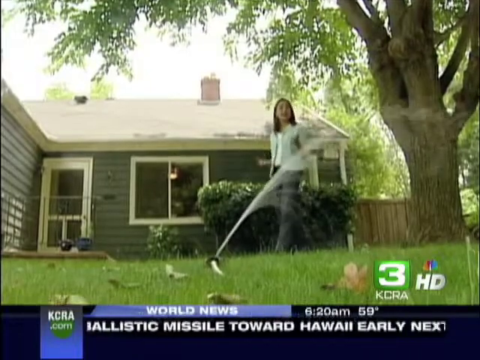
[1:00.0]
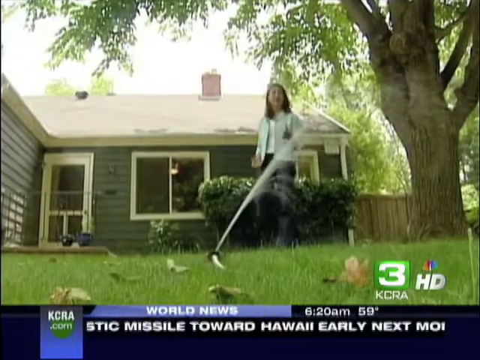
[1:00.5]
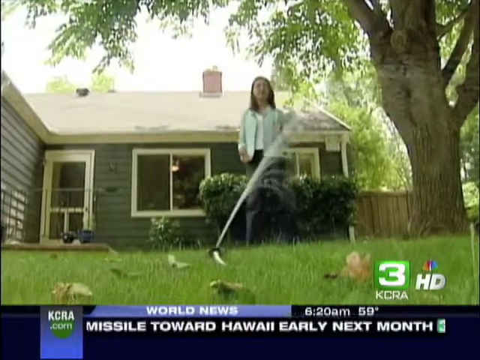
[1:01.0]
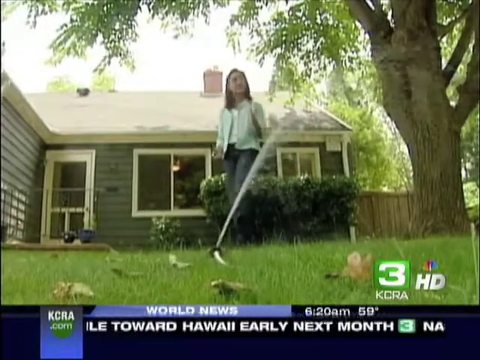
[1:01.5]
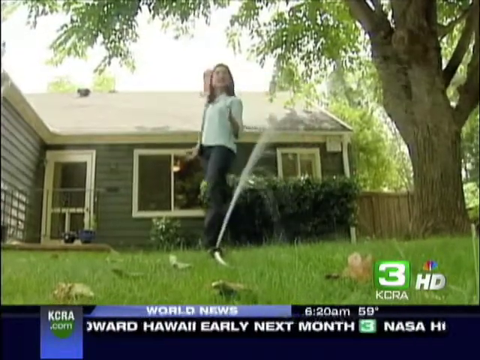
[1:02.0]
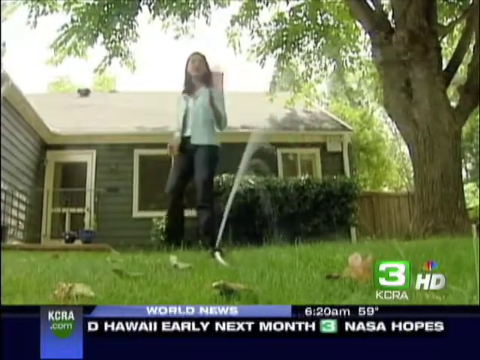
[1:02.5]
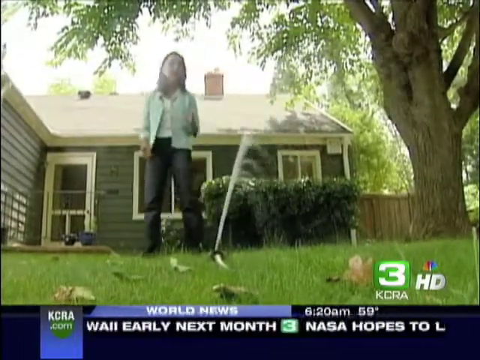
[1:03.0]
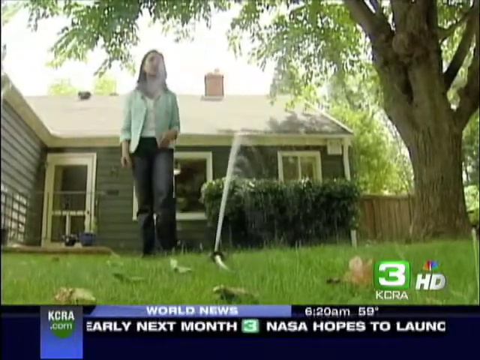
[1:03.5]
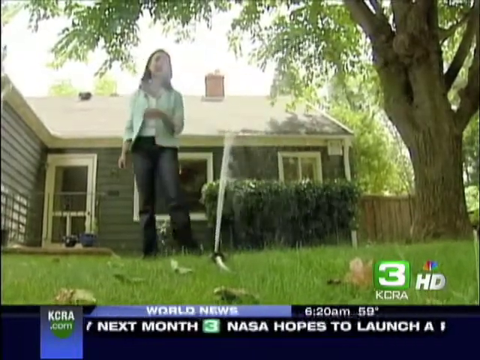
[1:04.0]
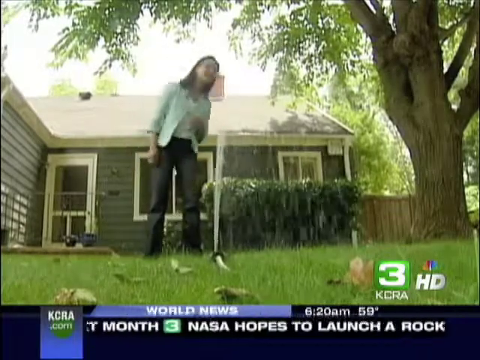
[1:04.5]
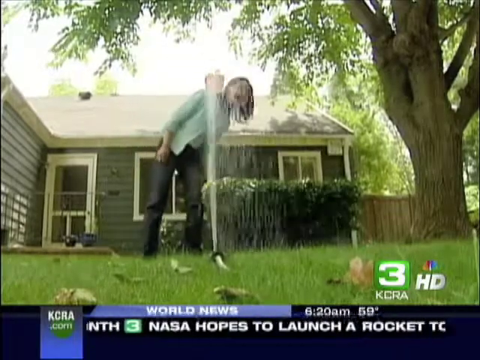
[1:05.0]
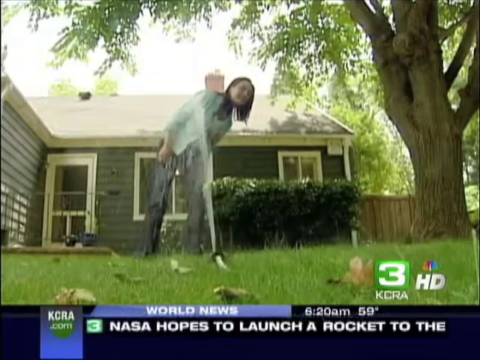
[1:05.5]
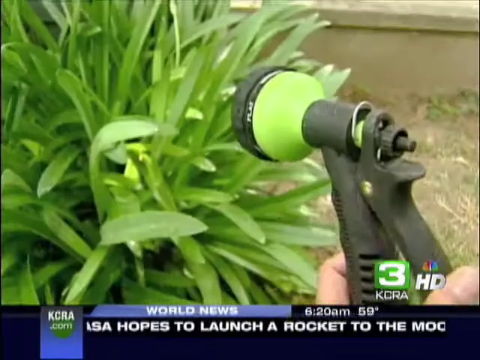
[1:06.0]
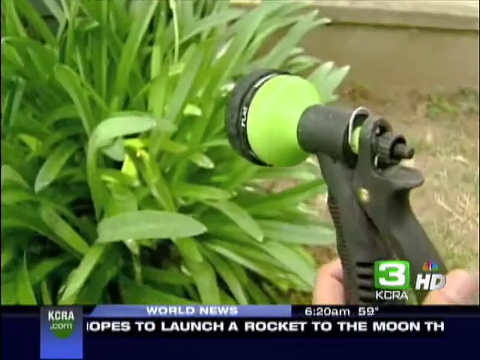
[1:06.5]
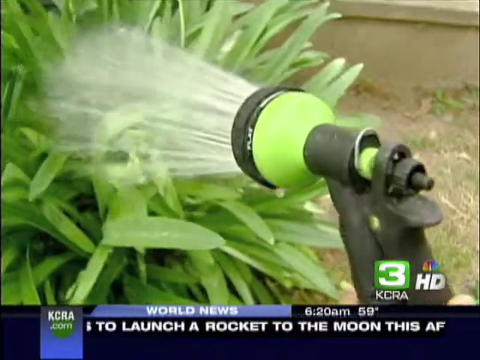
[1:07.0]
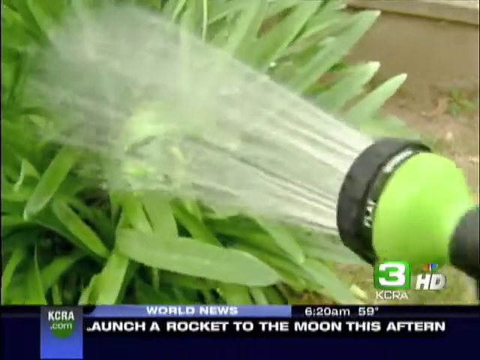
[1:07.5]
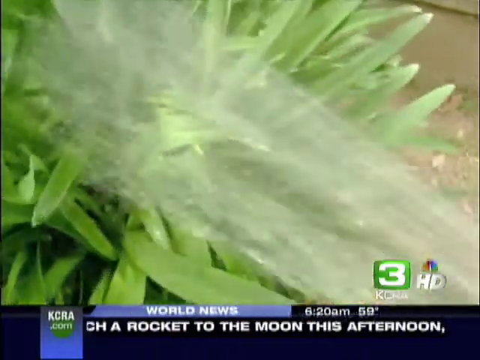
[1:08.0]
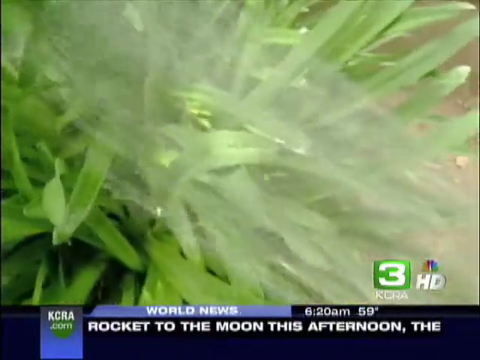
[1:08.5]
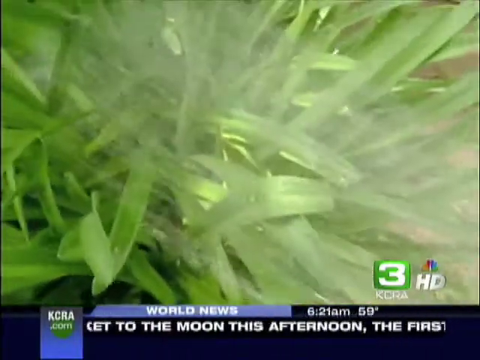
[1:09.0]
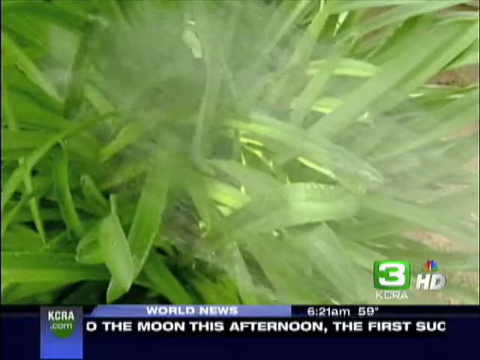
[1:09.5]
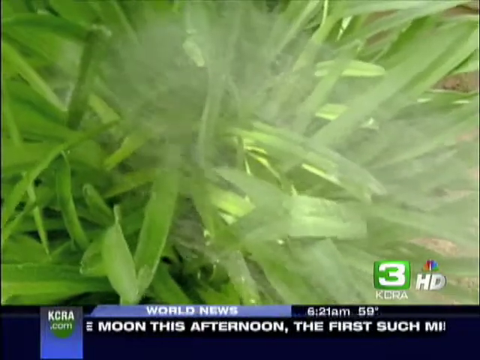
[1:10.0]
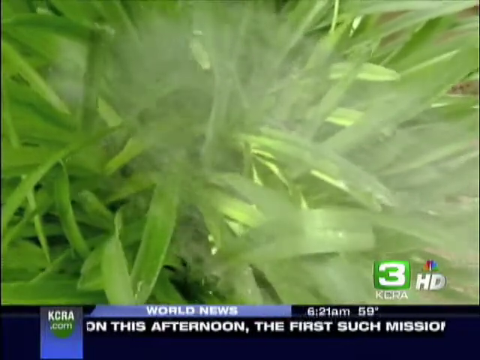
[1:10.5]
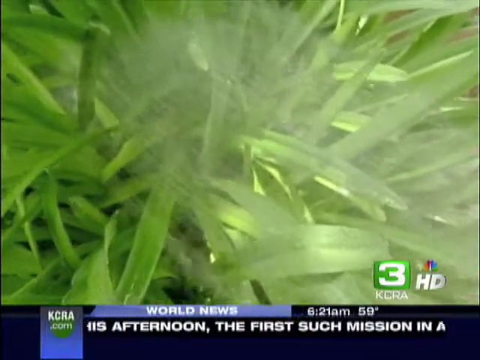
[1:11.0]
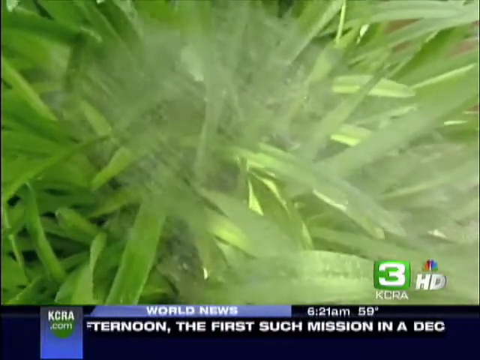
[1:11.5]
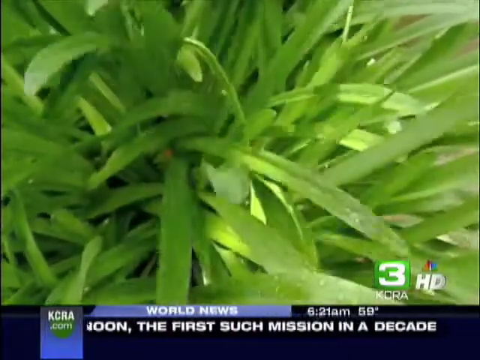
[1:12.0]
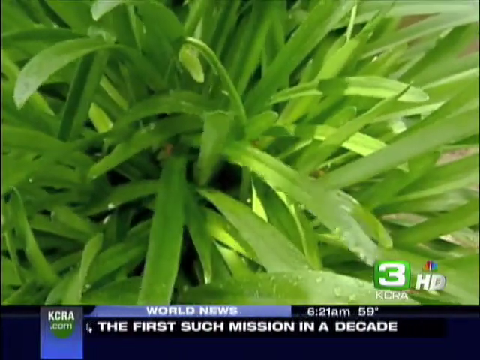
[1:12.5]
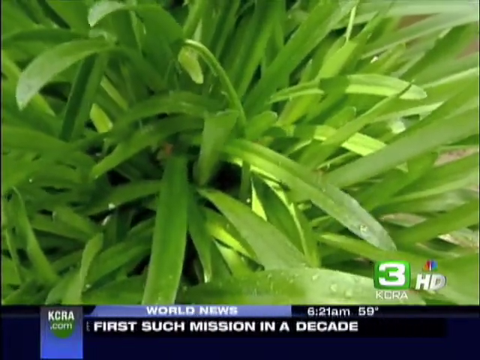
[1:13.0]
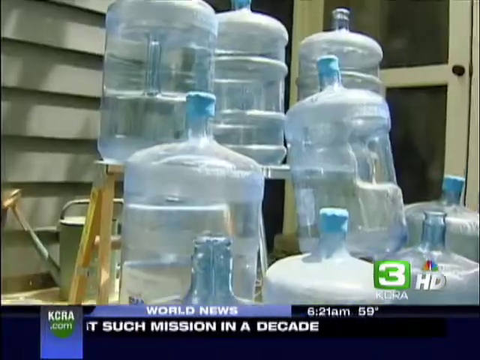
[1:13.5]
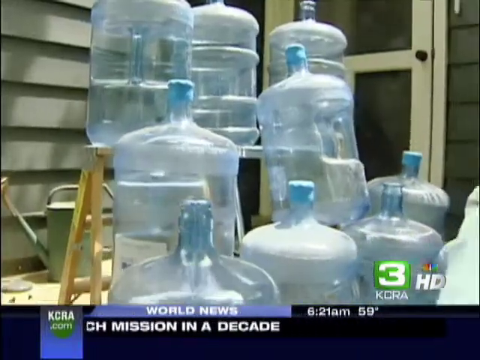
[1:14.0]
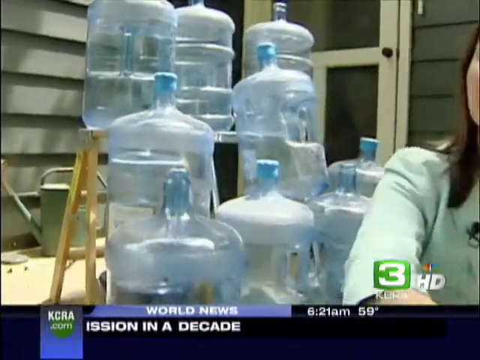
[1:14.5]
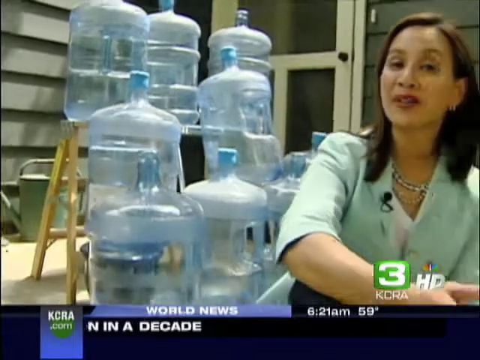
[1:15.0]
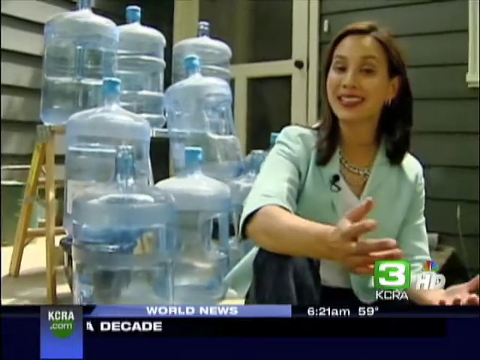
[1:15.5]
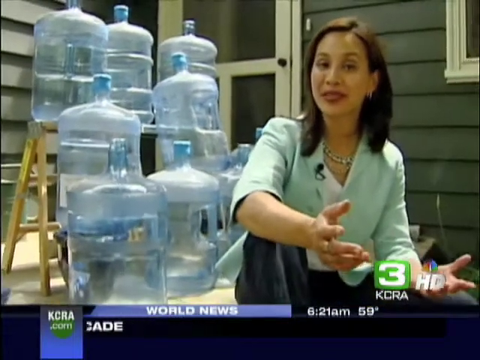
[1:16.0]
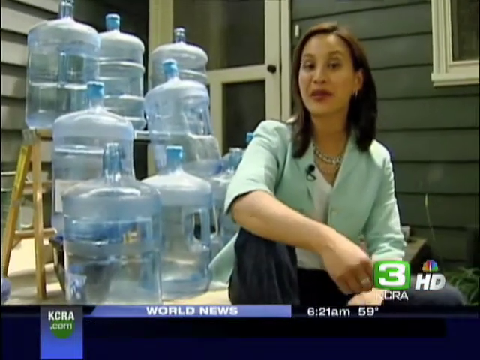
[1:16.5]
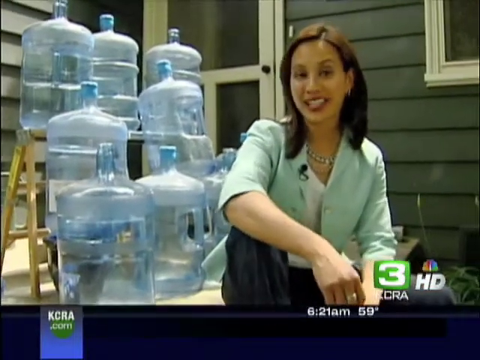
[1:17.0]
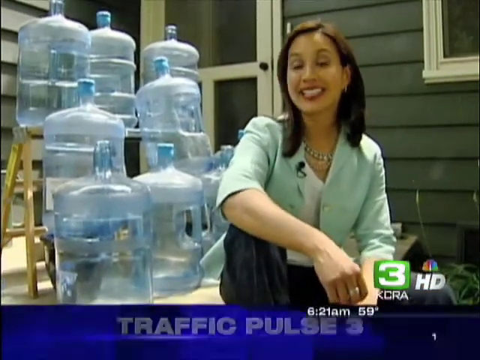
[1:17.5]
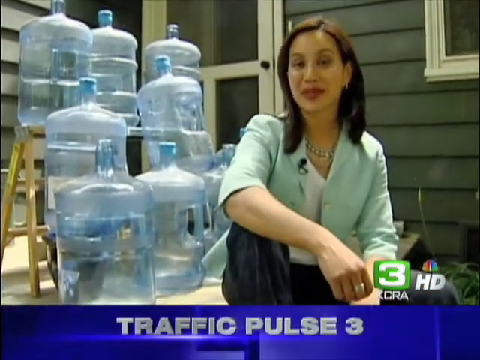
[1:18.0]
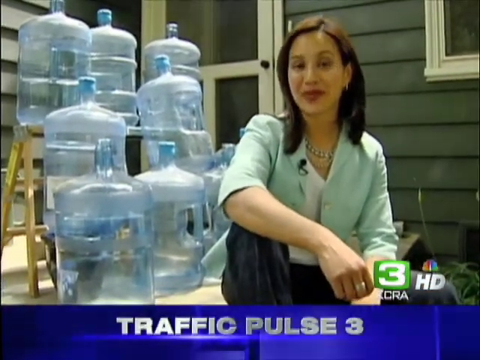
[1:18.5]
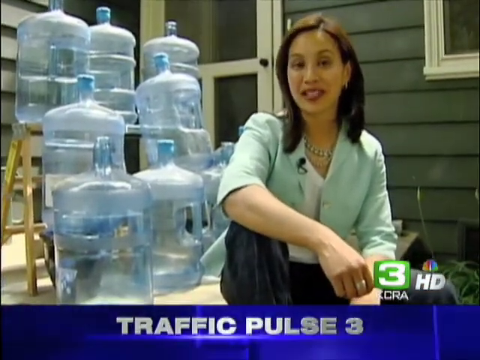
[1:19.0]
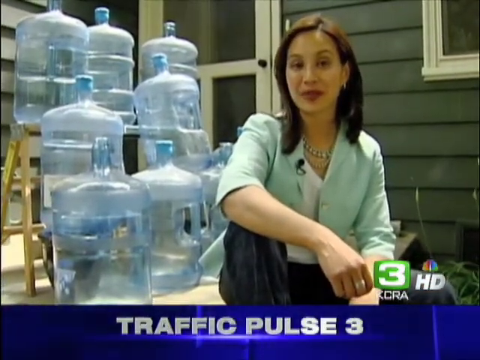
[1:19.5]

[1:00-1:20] The same woman goes up to the sprinkler, gesturing toward it and talking about it. She takes about three steps toward it, then tilts her head down and looks at it, talking into the camera the whole time she walks. In the background is a big, huge brown tree with a lot of branches and green leaves, a brown fence, and a gray house with a dark roof, a chimney, gray windows, a door and a porch. Some leaves are on the very green grass, which looks perfect.